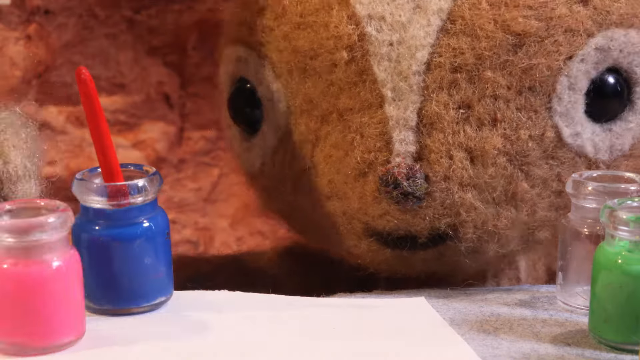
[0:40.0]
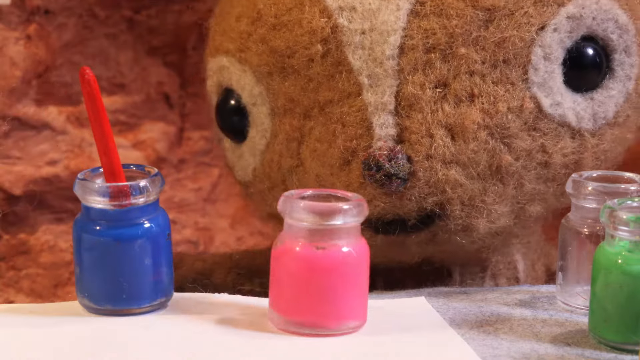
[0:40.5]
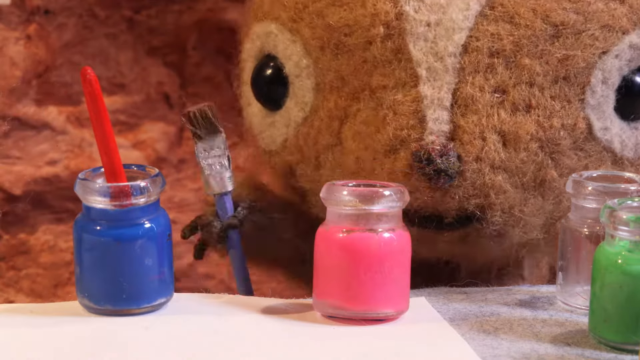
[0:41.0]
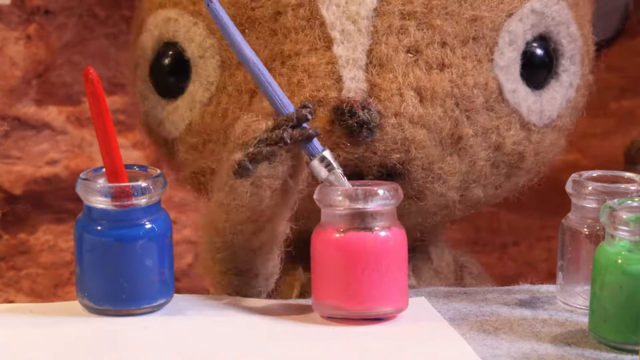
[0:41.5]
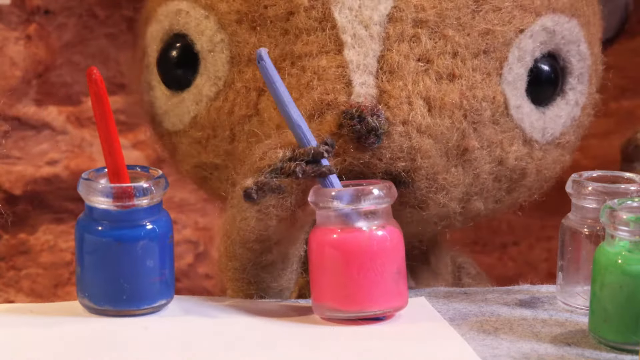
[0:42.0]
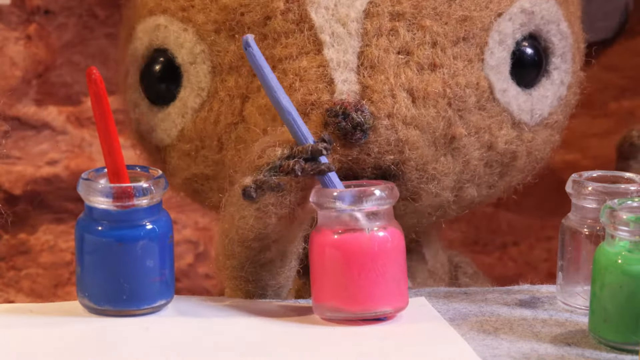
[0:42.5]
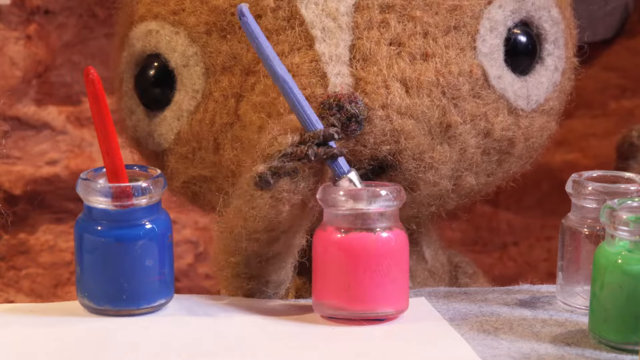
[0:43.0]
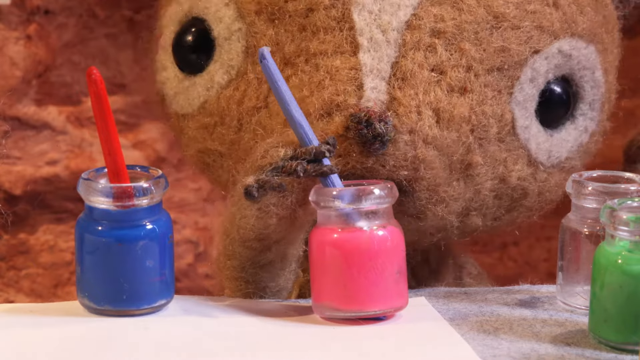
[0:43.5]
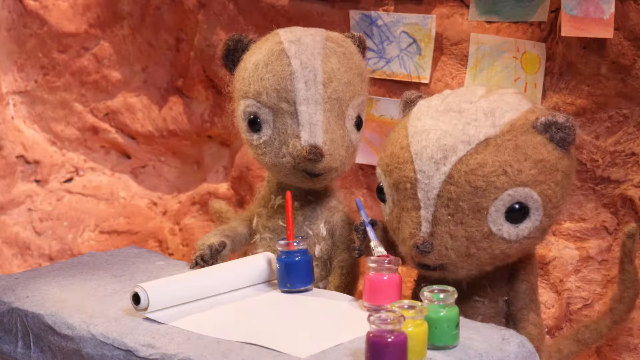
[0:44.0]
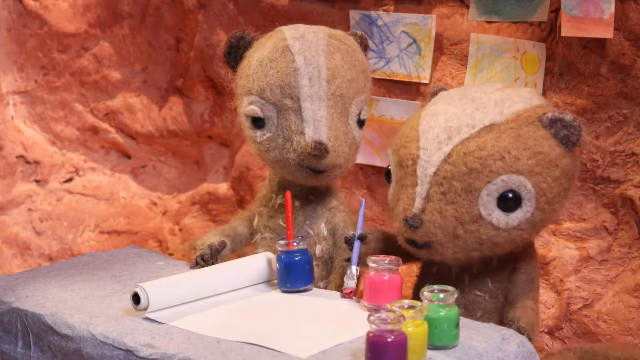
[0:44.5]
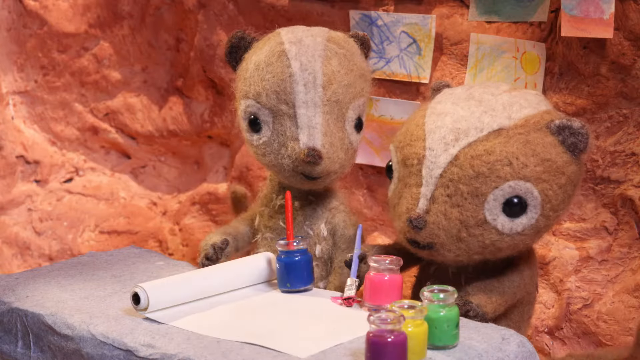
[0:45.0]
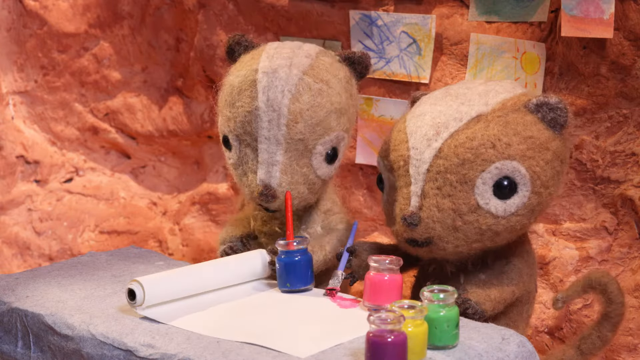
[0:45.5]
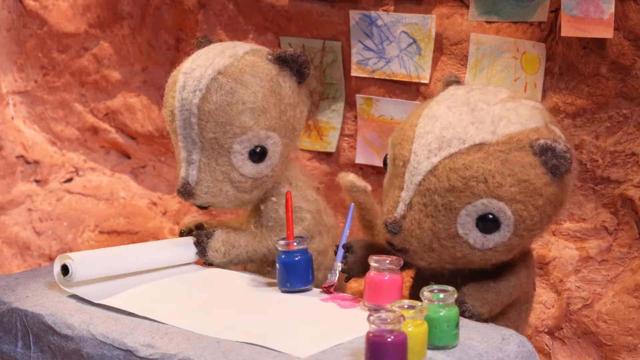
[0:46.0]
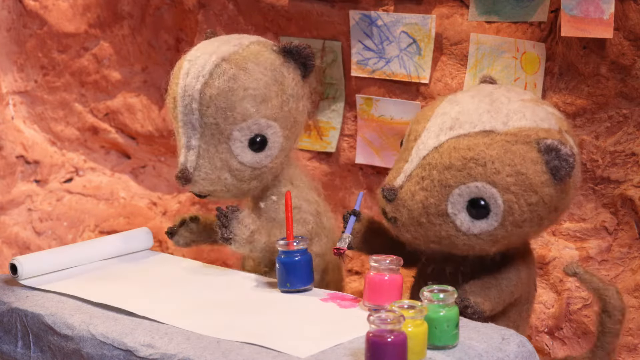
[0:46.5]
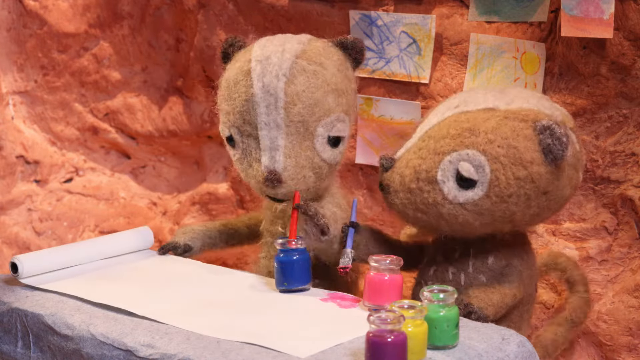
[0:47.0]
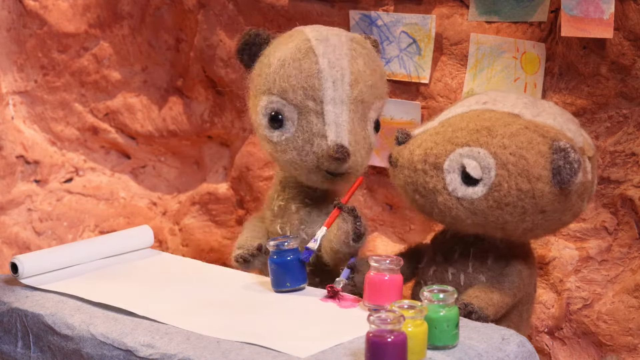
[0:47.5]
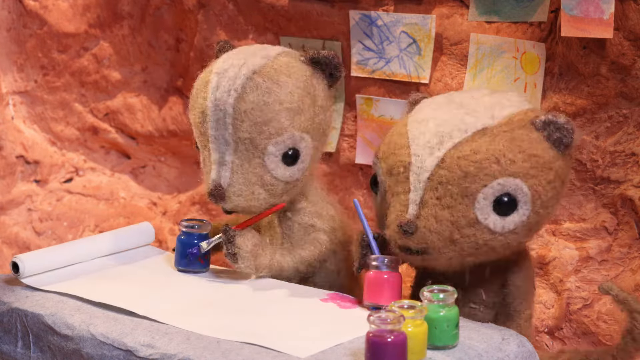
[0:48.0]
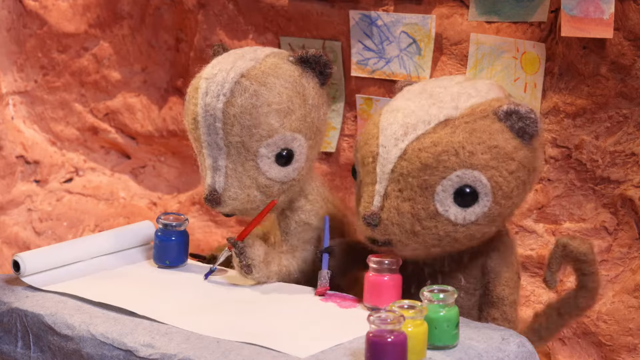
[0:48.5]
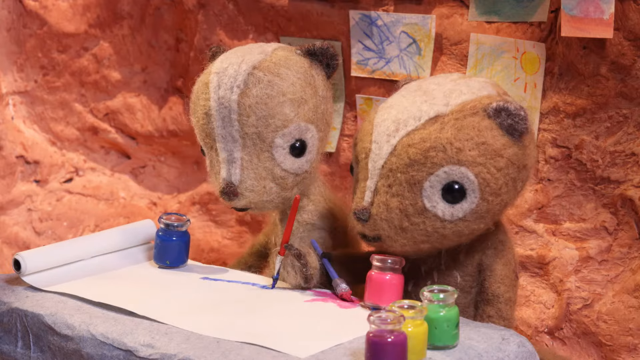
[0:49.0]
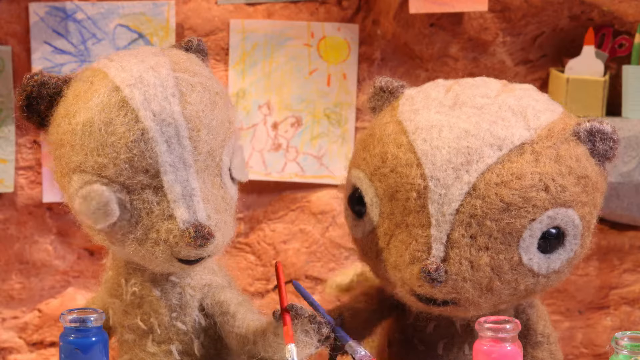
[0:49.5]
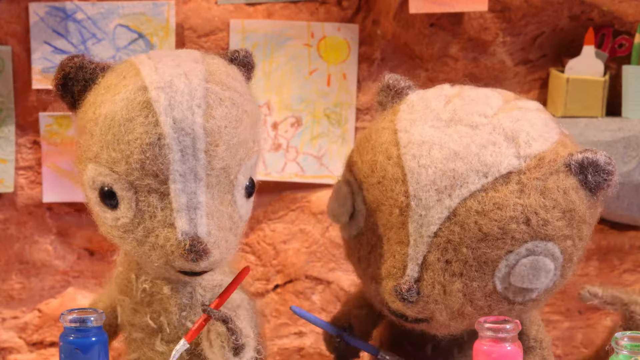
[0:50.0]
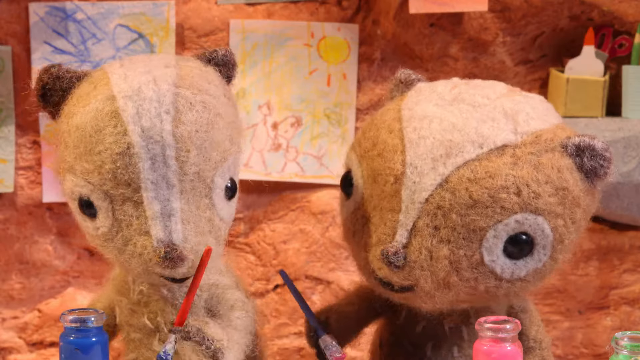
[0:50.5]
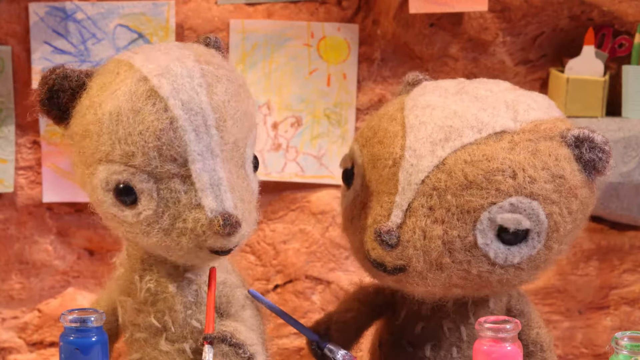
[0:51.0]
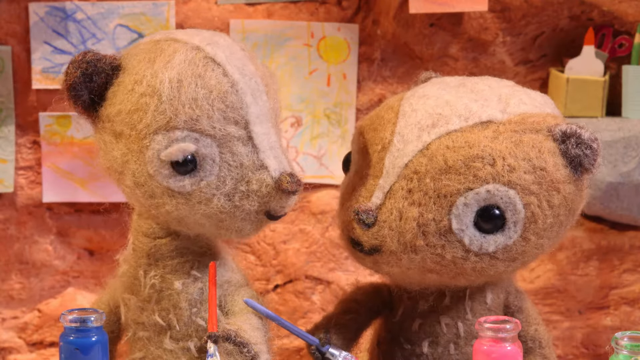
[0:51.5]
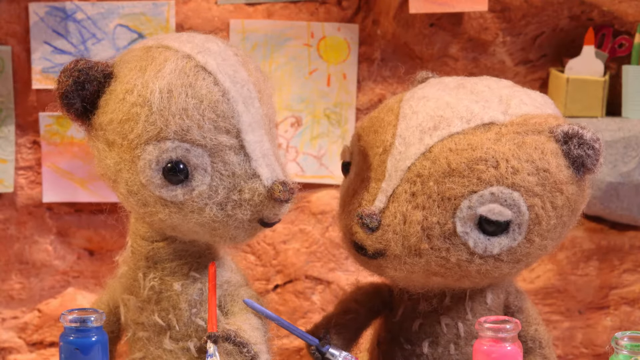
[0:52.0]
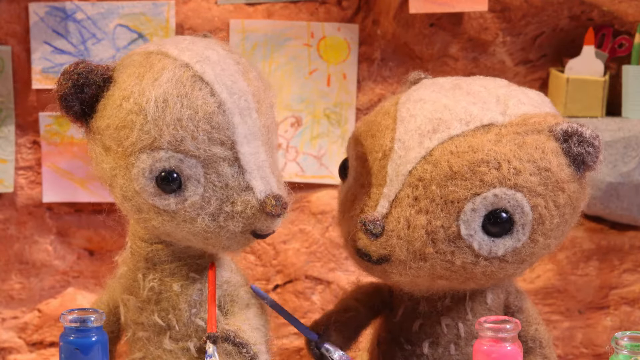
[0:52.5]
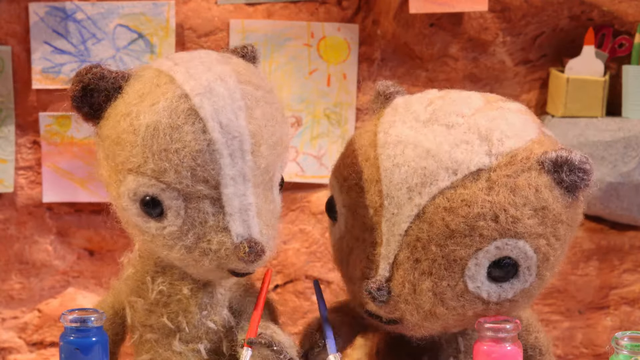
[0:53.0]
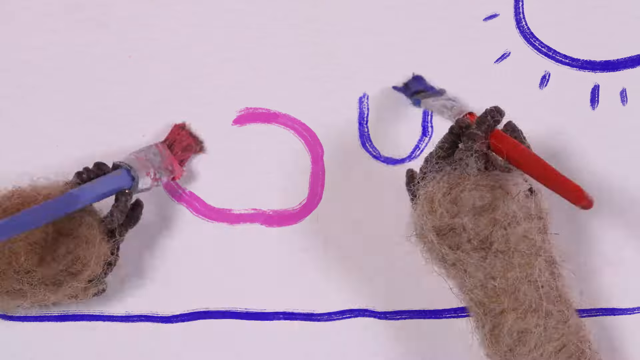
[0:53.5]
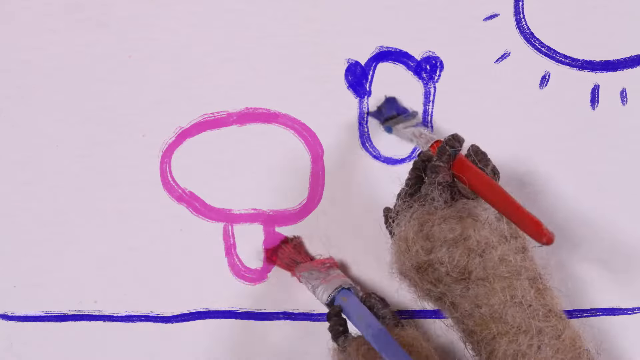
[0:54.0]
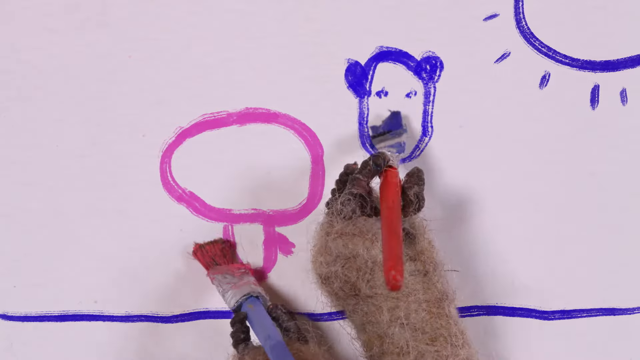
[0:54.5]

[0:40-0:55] A close-up shows a small animated creature that looks like a chipmunk dipping a purple paintbrush into pink paint, with jars of blue, green, yellow and purple paint nearby. The scene switches to show a second chipmunk; one of the two is lighter in color than the other. They paint on top of a white piece of paper with blue and pink paint, smiling, looking at one another and blinking. Their drawing is a blue smiley face. In the background is an orange rock-like structure with various paintings hanging on it.